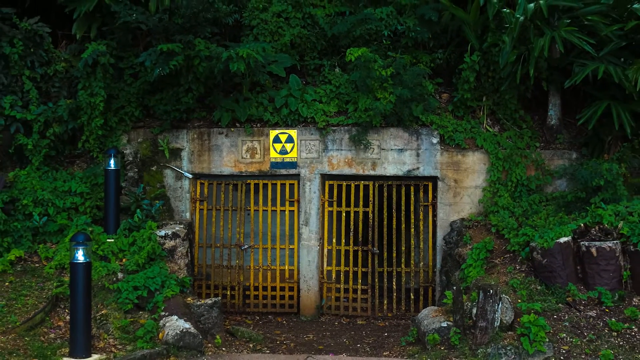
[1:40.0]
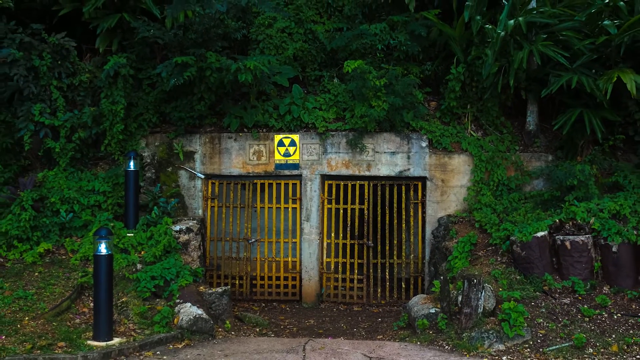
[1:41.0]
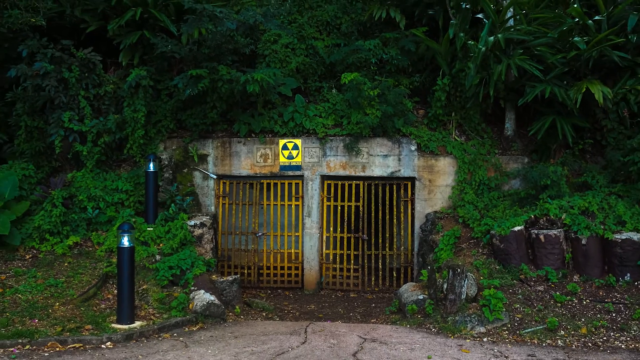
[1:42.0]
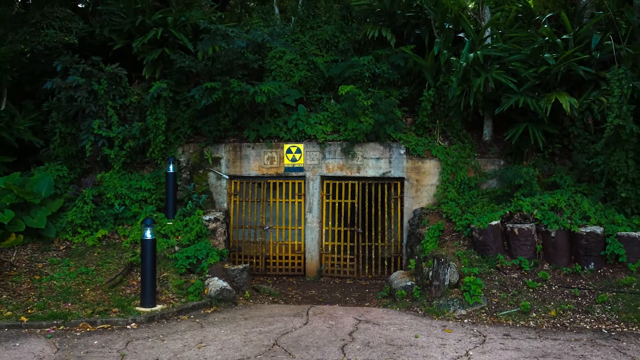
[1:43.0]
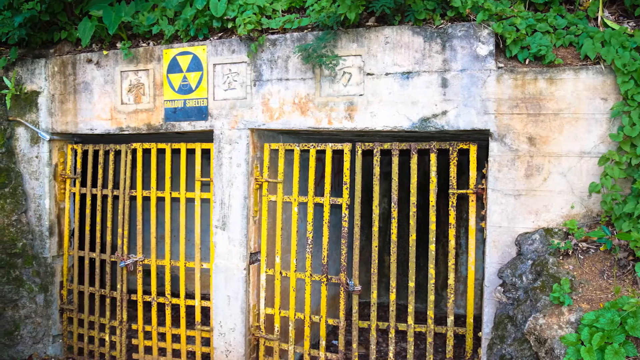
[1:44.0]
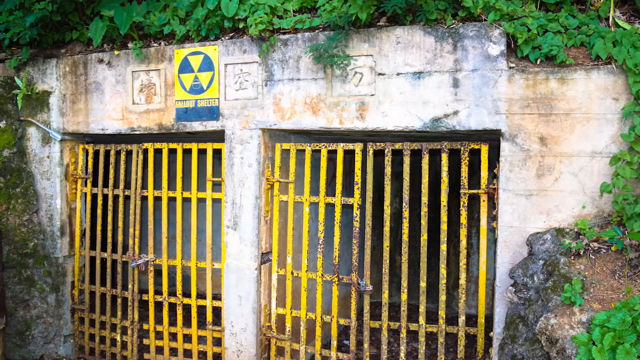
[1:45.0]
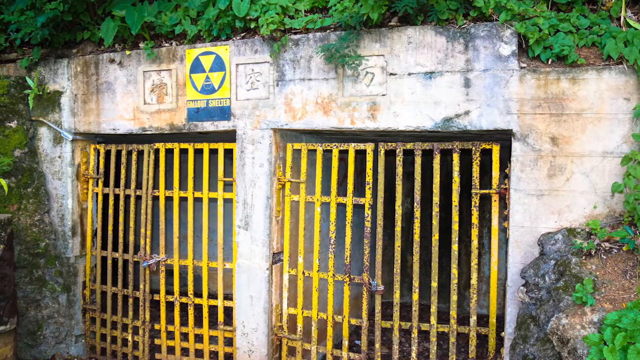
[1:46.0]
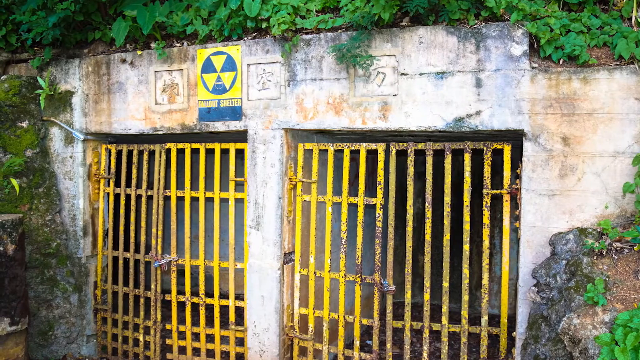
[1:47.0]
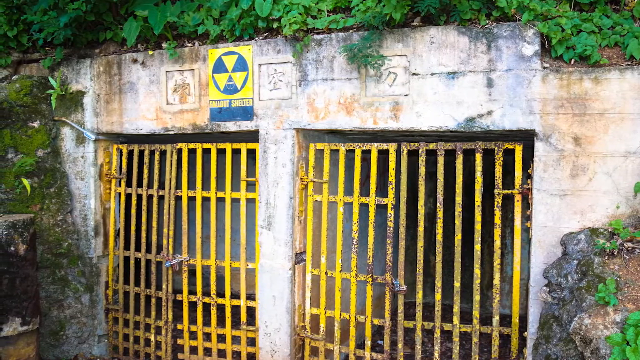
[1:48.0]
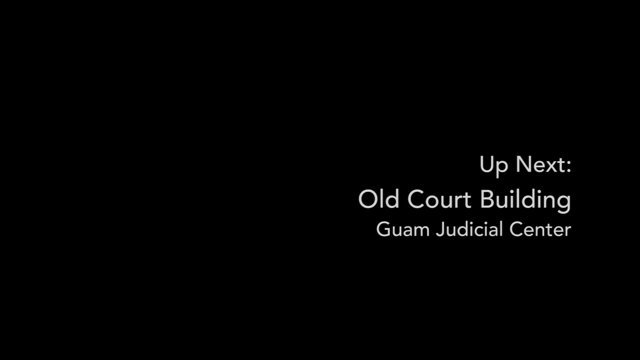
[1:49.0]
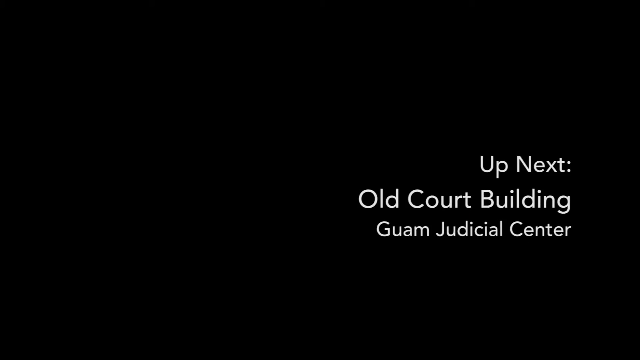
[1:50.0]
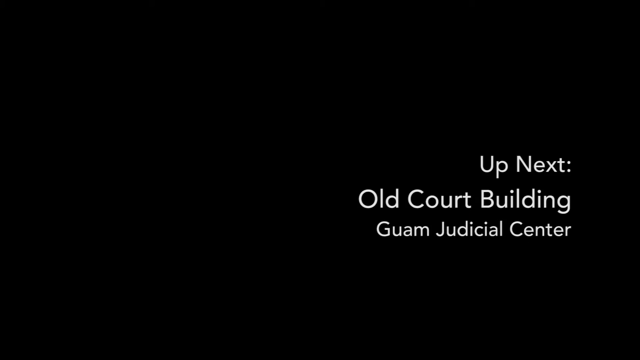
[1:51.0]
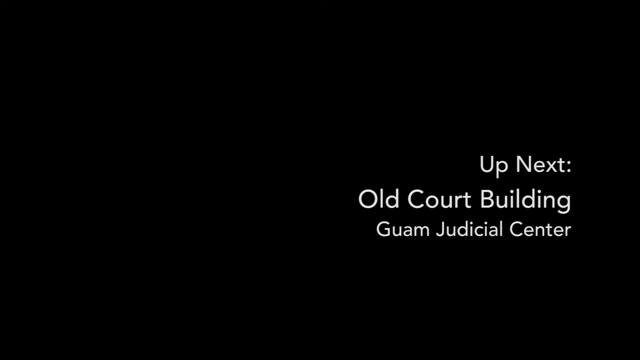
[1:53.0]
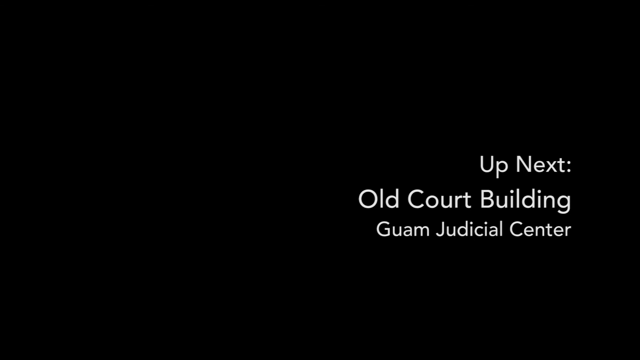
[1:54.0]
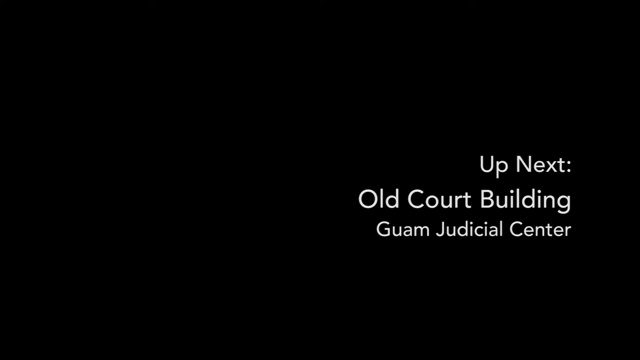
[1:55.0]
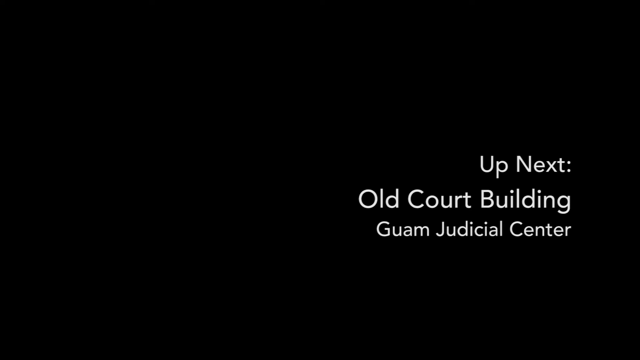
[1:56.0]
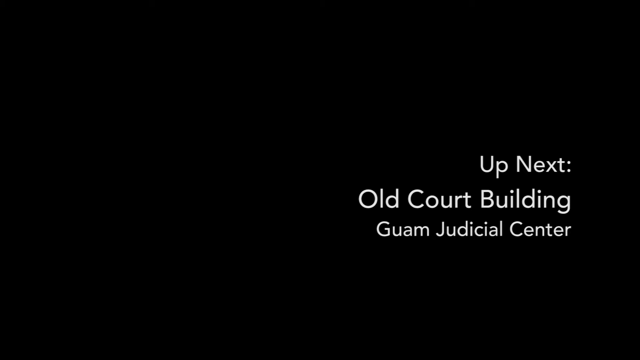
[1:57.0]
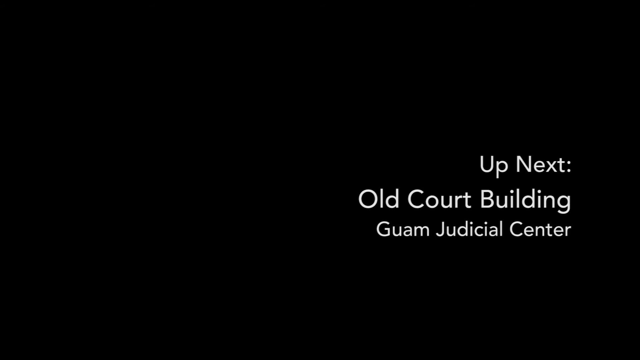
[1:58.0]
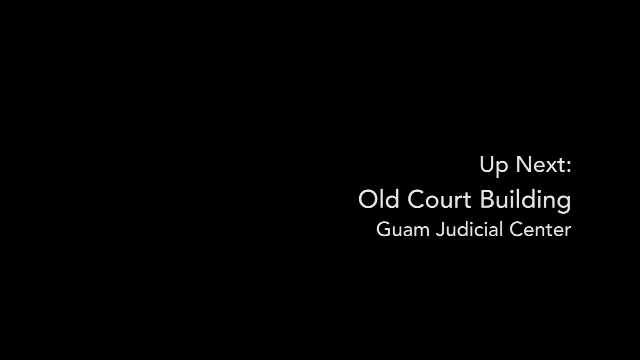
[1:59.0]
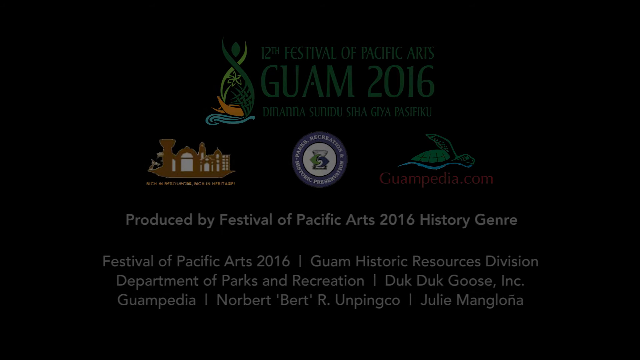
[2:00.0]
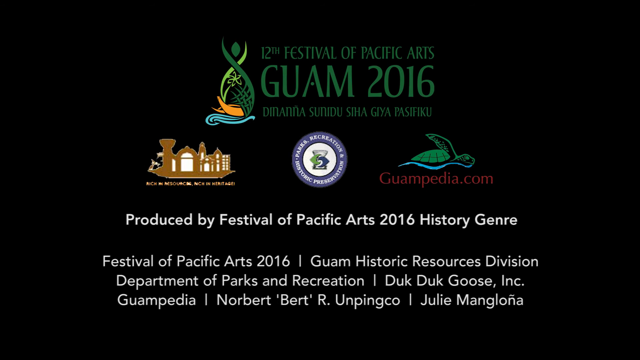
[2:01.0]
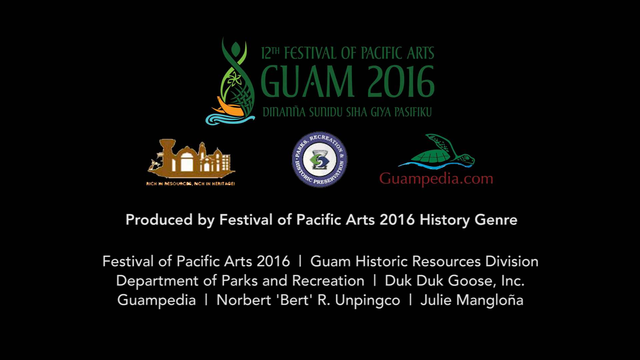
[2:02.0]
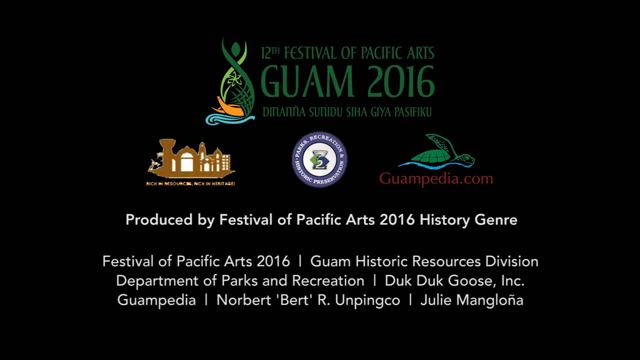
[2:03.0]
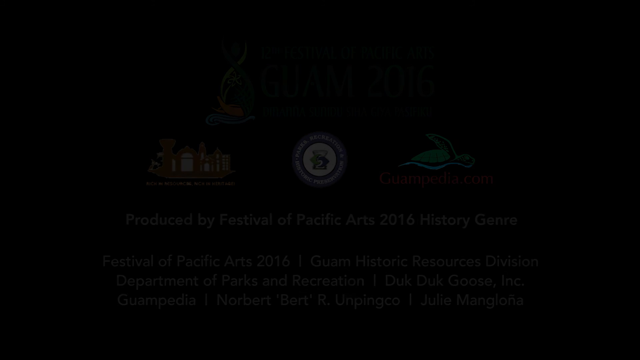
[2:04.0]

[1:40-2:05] A derelict fallout shelter, rectangular and made from concrete, sits in the centre of the shot, surrounded by greenery on the left and right and across the top third of the screen. At its front are two rusted yellow gates that appear to be locked. Chinese characters are imprinted in the concrete across the top of the gates, and there is a yellow and black sign with an icon representing radiation and yellow text that says "fallout shelter". Two black cylindrical streetlights are on the left of the screen, and in the background are tropical vegetation, palm trees and ferns. A slightly different angle of the same shelter follows, with the camera positioned to the right, angled towards the left of the shelter and panning from right to left. Then a black screen shows white text reading "up next, old court building, Guam Judicial Centre", which stays on screen for several seconds. Another black screen follows with various icons and text. Green text at the top reads "12th Festival of Pacific Arts, Guam 2016", with text beneath it in an unidentified language. Below that are three icons or logos; the one on the far right is a turtle swimming towards the right of the screen, with the text "guampedia.com" underneath. Under that, white text reads "Produced by Festival of Pacific Arts 2016 History Genre Festival of Pacific Arts 2016 Guam Historic Resources Division Department of Parks and Recreation Duk Duk Goose Inc", and below it "Guampedia, Norbert Bert R Umpingco and Julie Manglona".